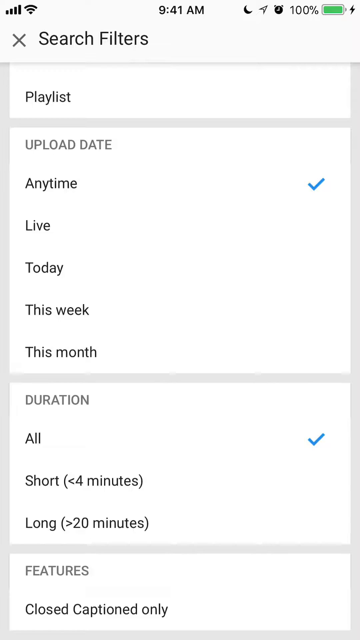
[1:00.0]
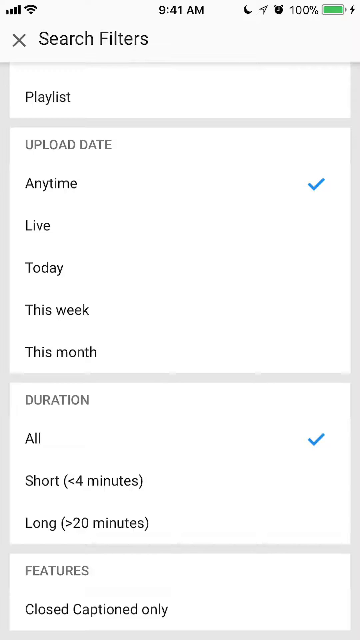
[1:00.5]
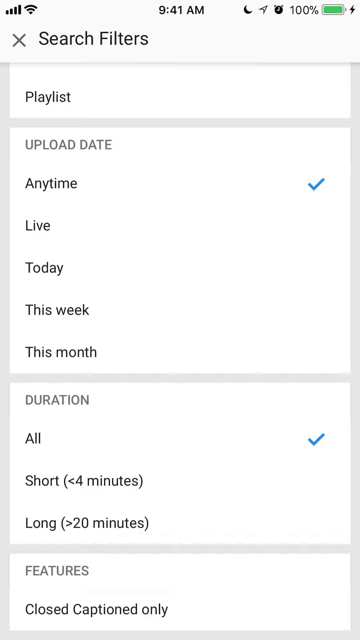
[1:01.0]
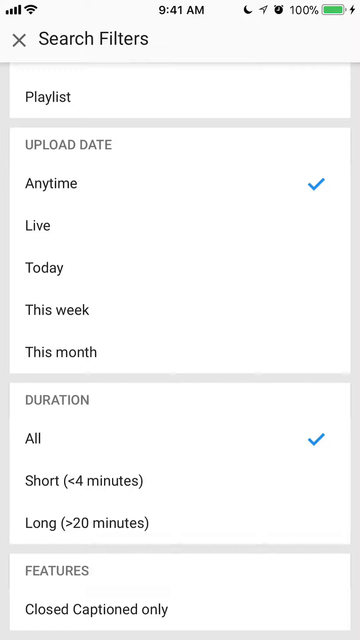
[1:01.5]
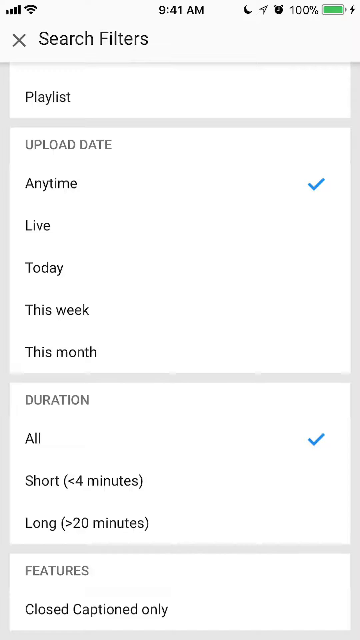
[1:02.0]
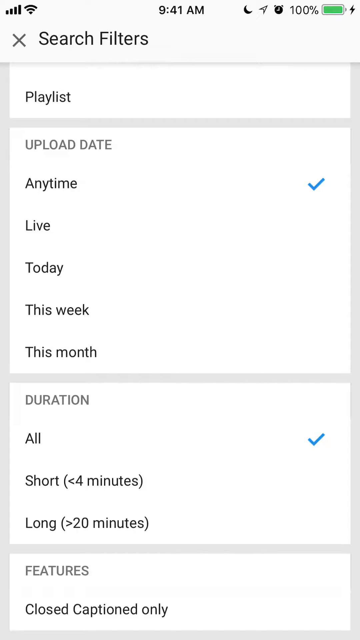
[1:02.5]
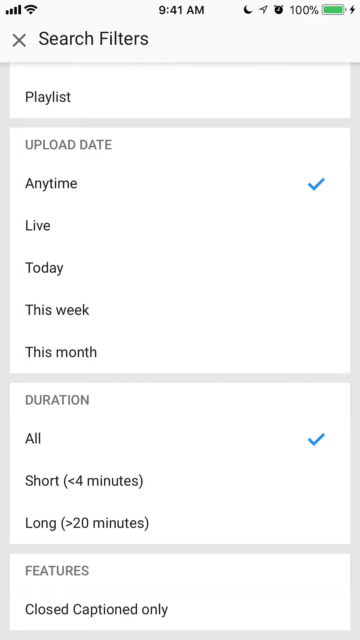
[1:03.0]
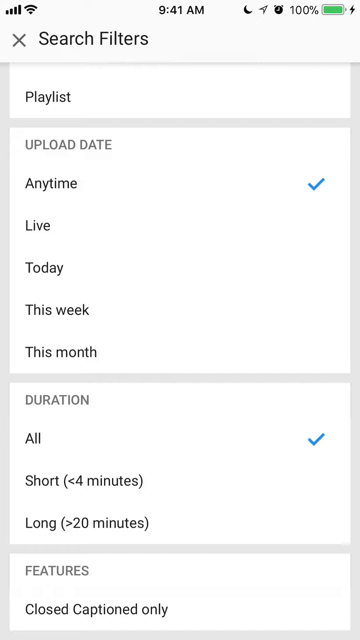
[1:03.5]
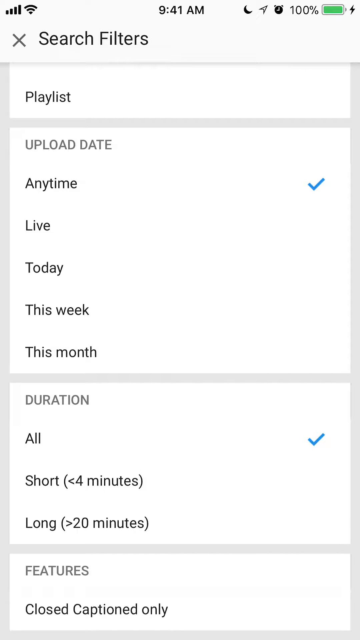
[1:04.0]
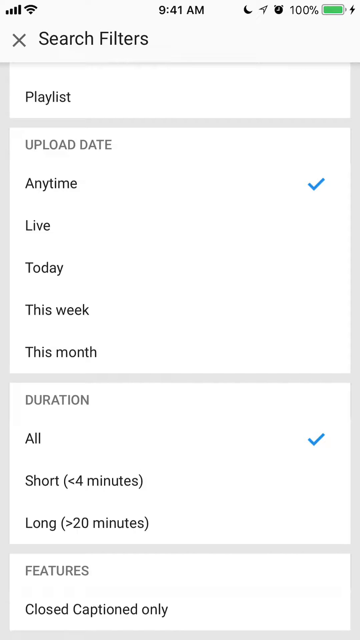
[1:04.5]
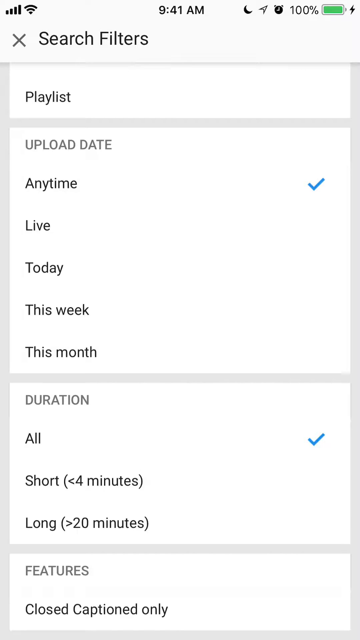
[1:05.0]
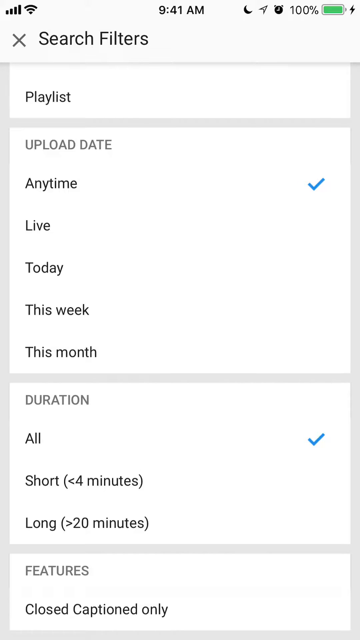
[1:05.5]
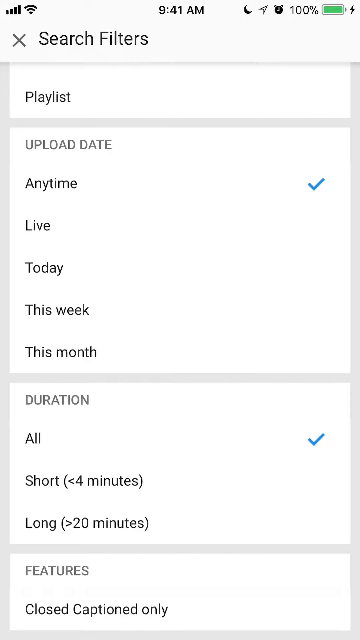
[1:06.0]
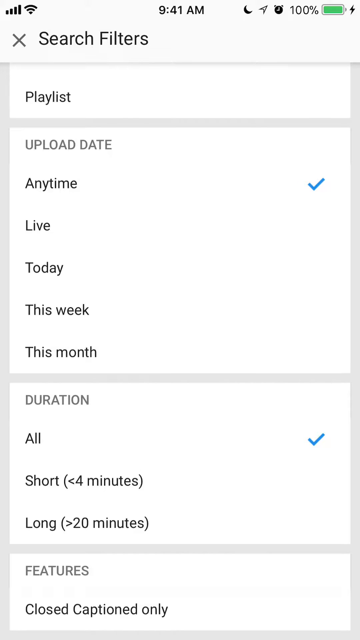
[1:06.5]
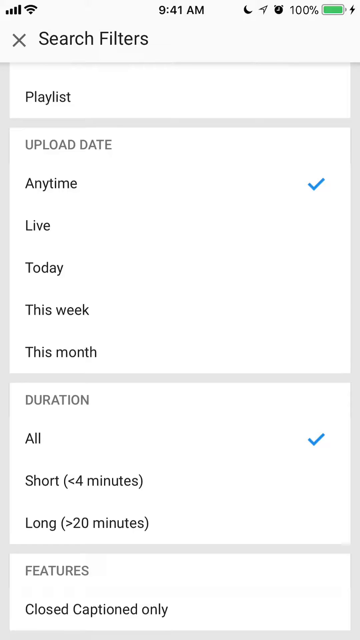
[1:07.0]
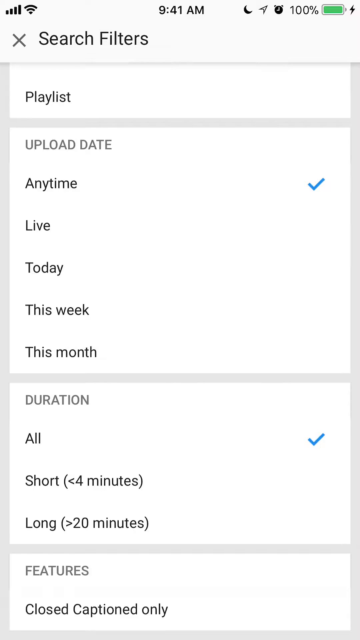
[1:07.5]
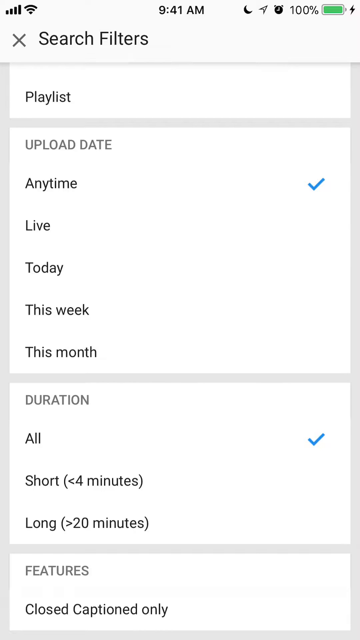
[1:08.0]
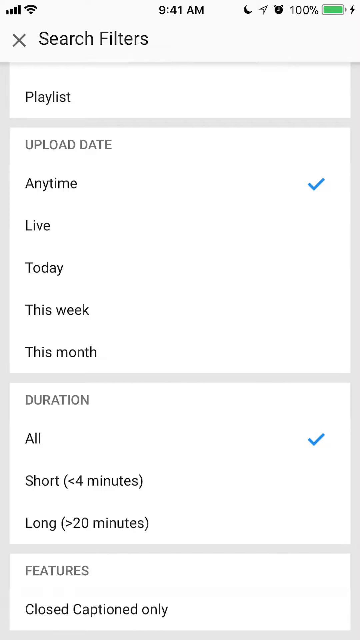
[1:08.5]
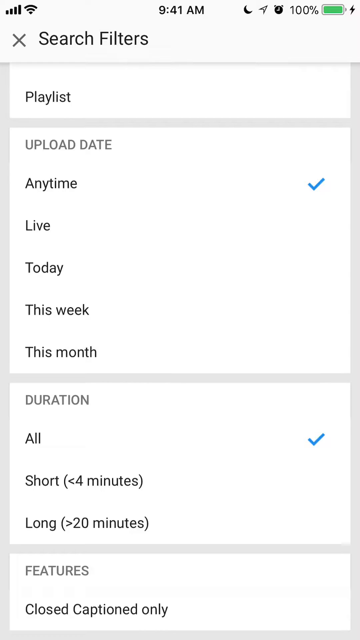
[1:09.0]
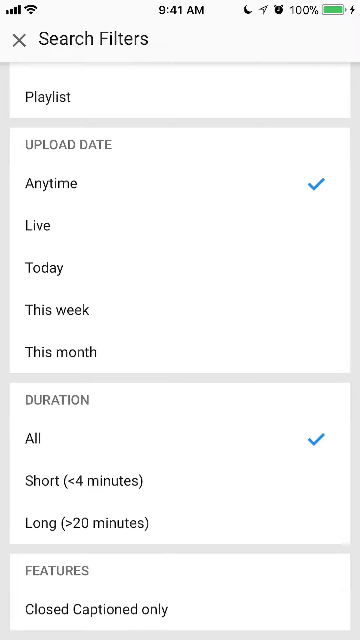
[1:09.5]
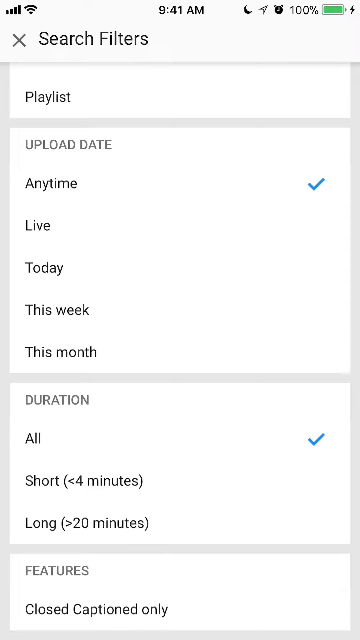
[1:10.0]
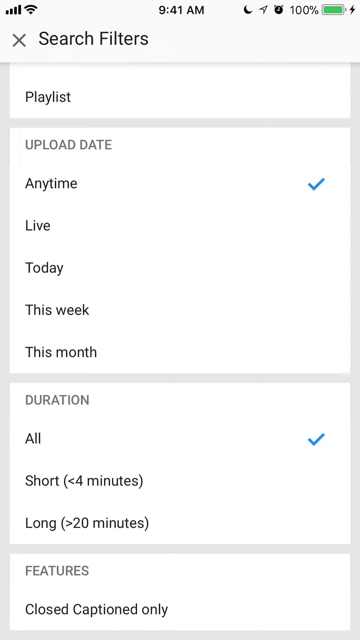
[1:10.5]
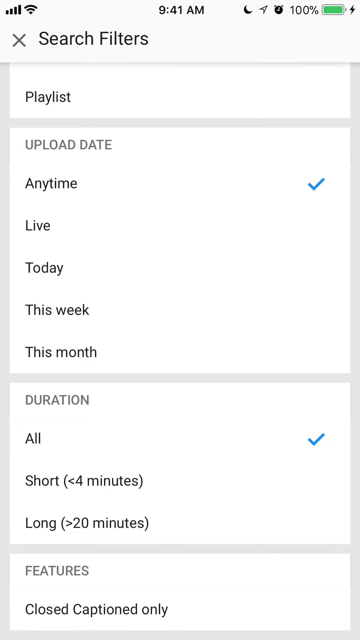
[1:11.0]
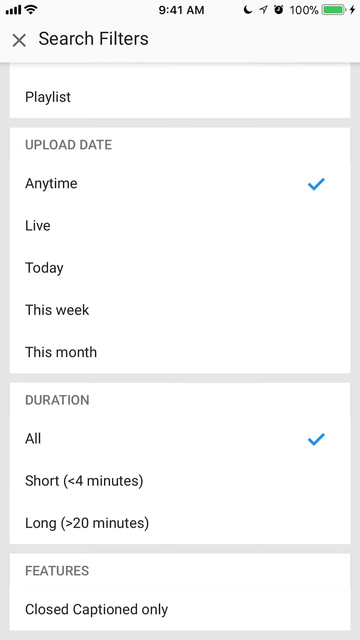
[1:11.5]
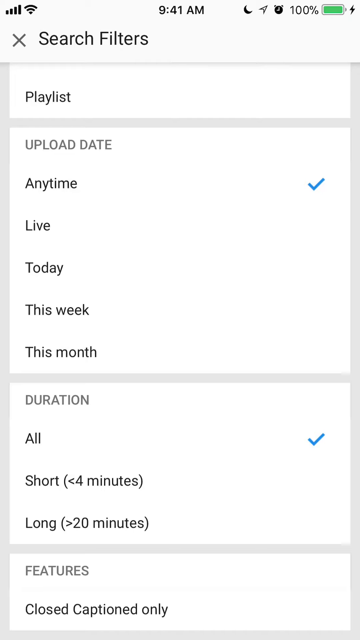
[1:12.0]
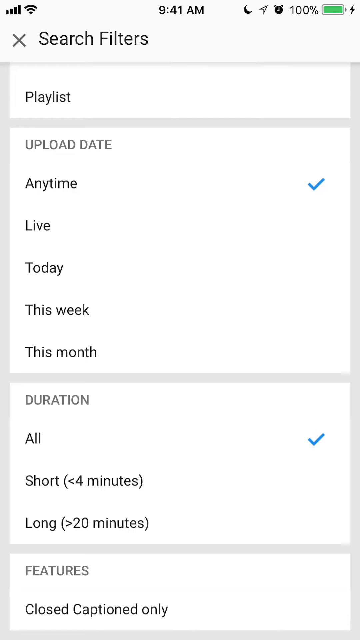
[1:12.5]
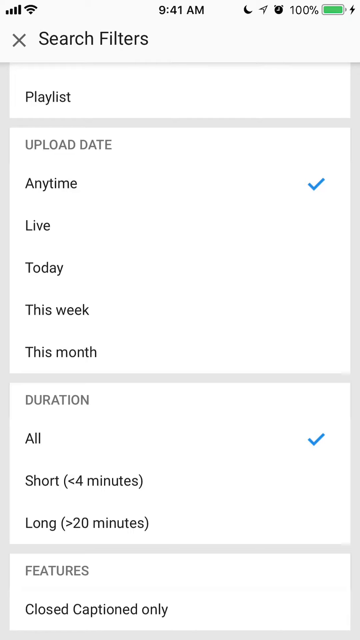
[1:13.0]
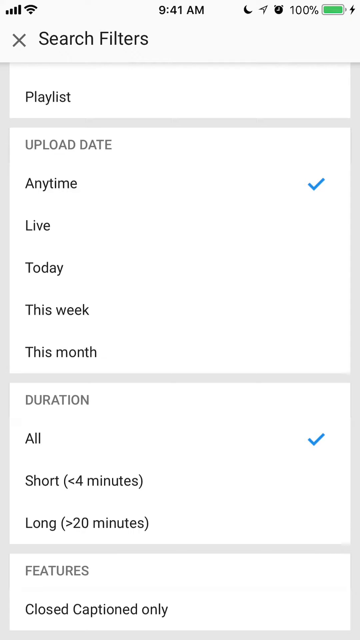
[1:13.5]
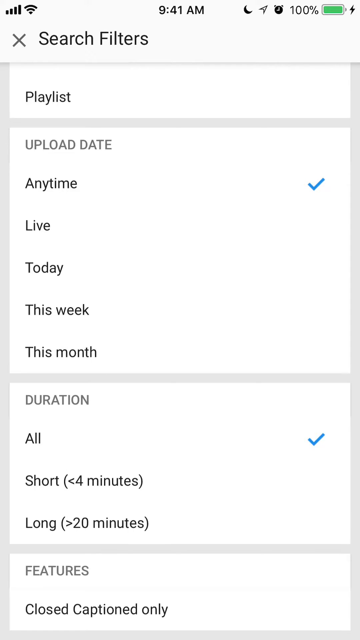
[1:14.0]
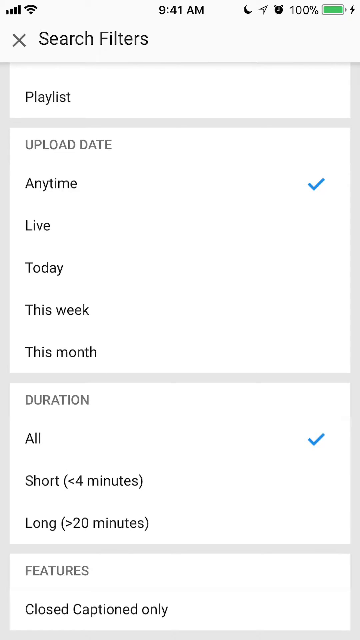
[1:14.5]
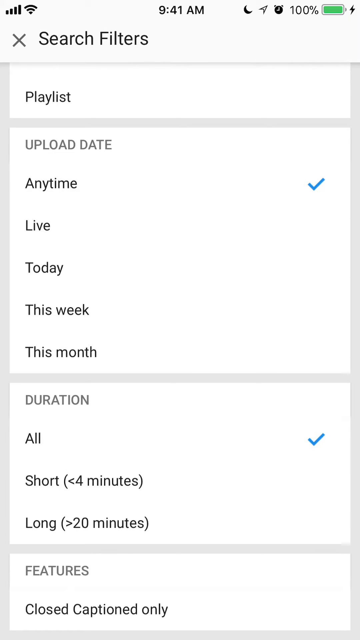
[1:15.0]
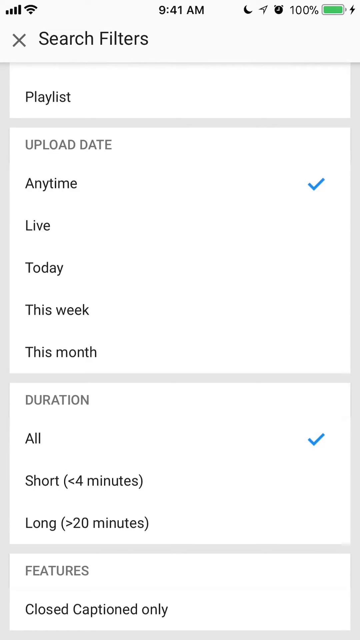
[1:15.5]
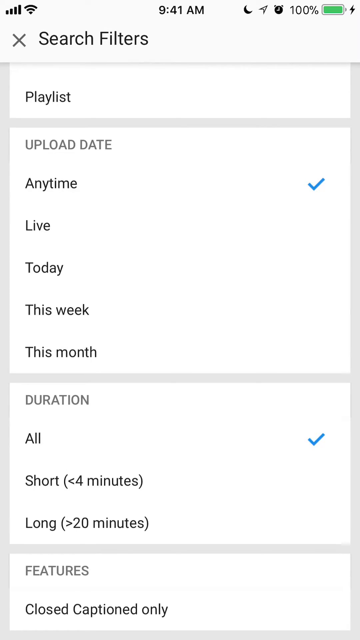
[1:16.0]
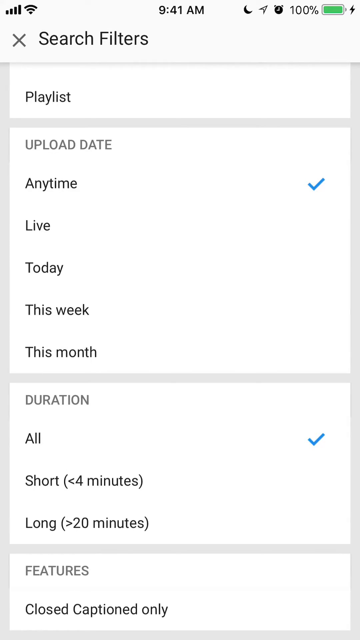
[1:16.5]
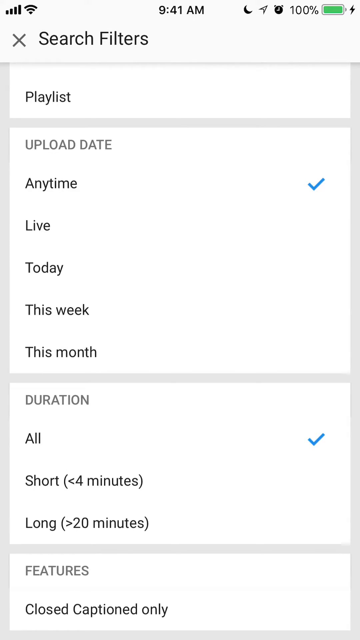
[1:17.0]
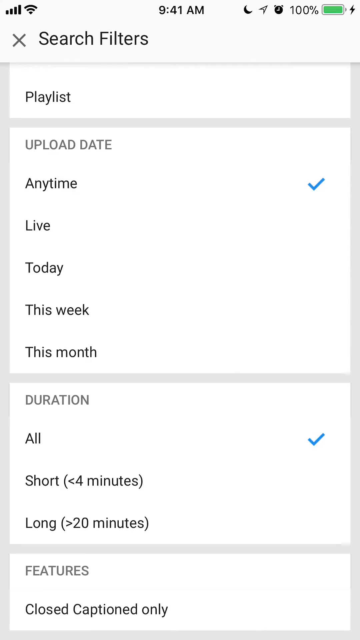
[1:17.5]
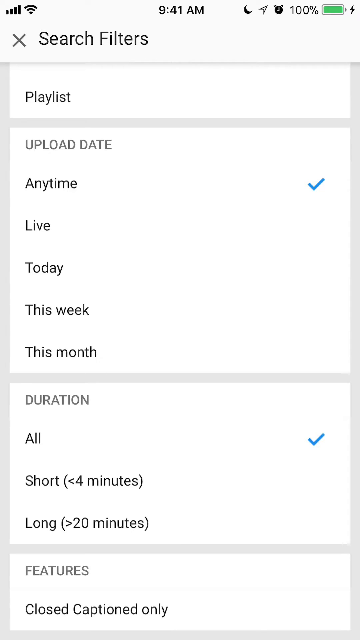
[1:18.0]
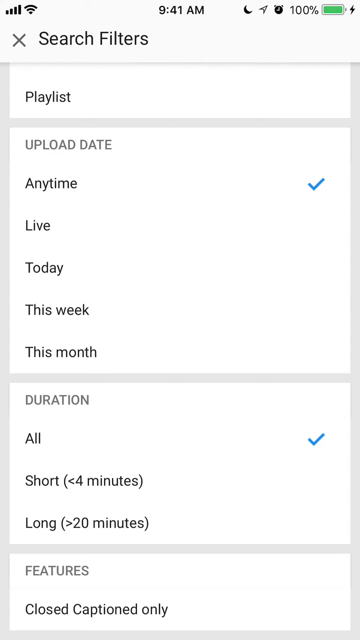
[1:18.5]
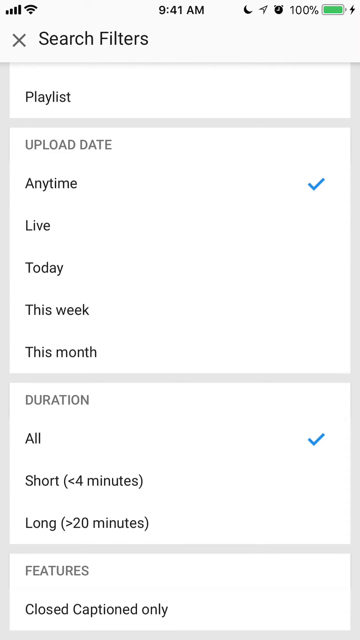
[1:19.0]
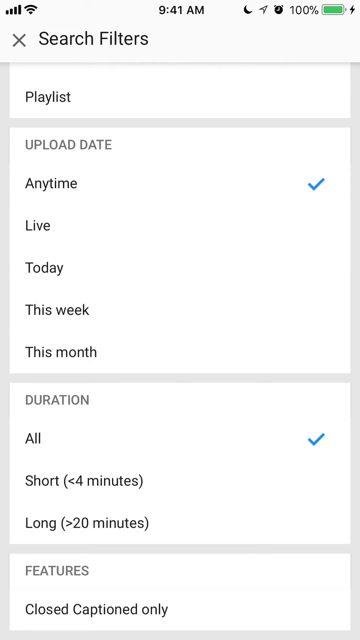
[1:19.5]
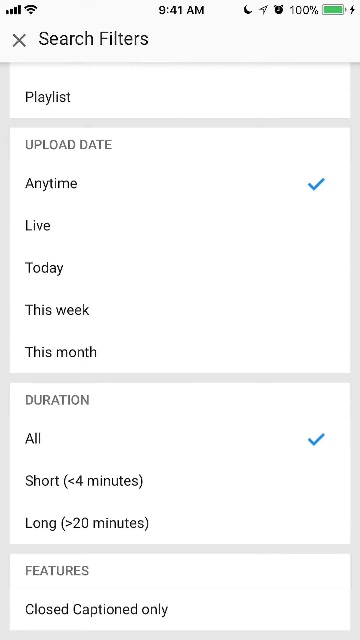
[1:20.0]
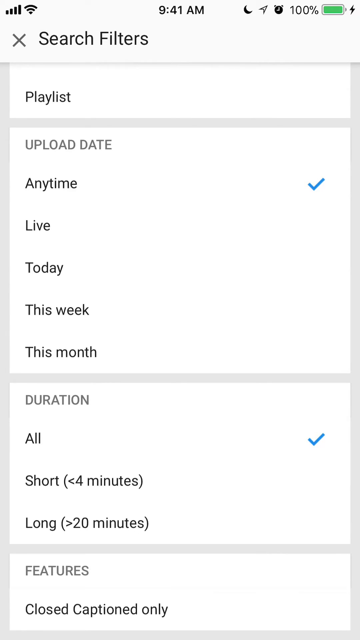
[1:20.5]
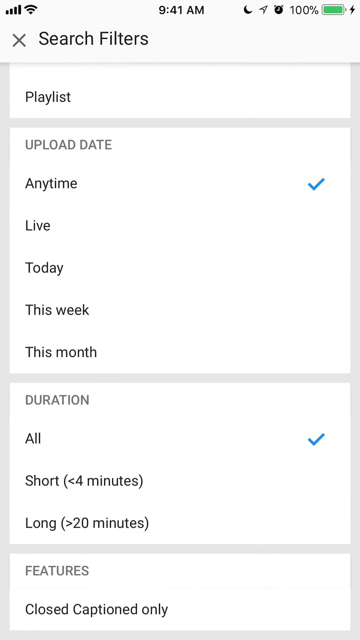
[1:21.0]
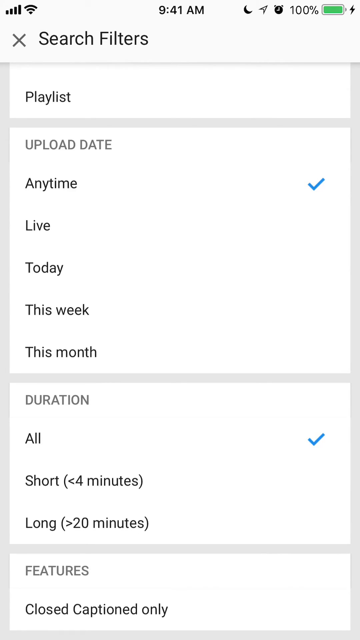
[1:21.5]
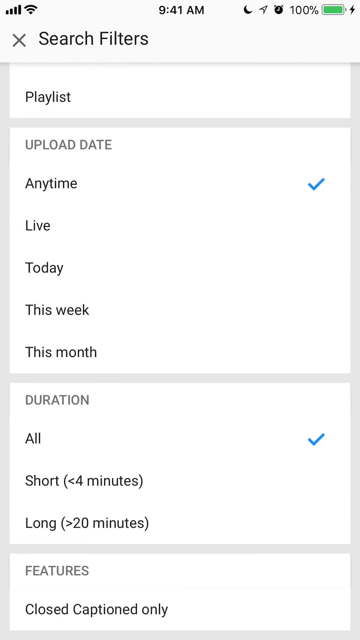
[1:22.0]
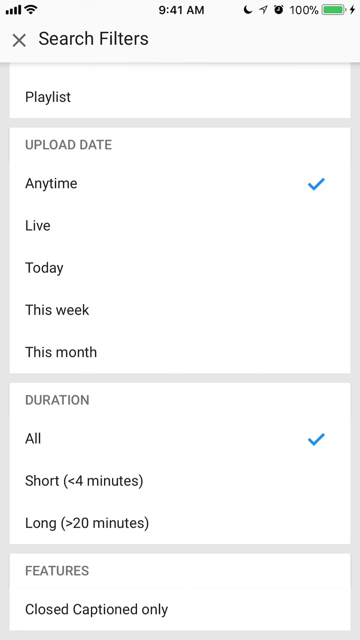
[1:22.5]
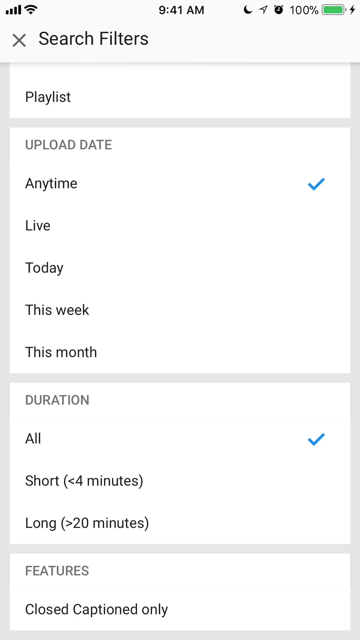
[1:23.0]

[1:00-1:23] The search filters screen is shown, with upload date set to "any time" and duration set to "all"; both selections have blue ticks. The view stays on this section for quite a while. Each section is white, the background is grey, and all the text is black. The time at the top of the screen is 9.41 a.m. The battery is at 100%, the battery icon is green, and a lightning bolt indicator shows the phone is charging. A Wi-Fi signal with four bars is on the left and a 4G bar system on the right. There is an alarm icon also with four bars, and a do not disturb icon, a location icon and an alarm icon next to the battery symbol. The video remains on this screen for the rest of its duration.